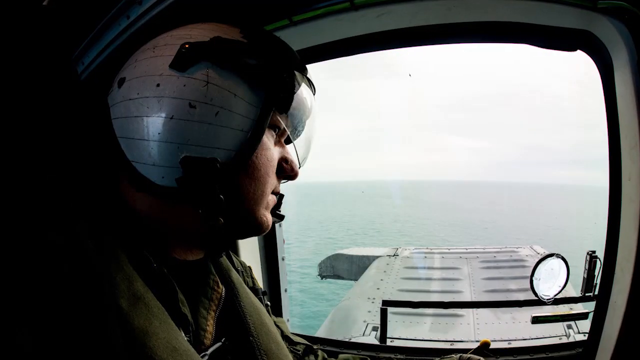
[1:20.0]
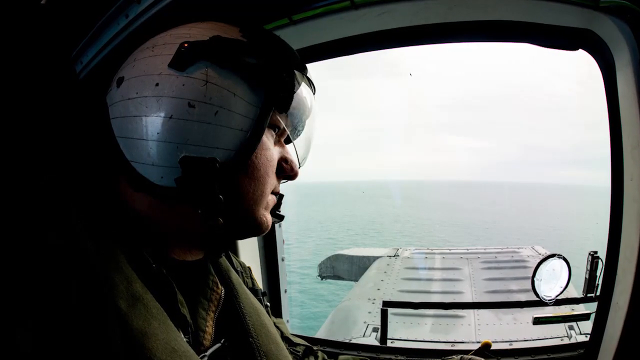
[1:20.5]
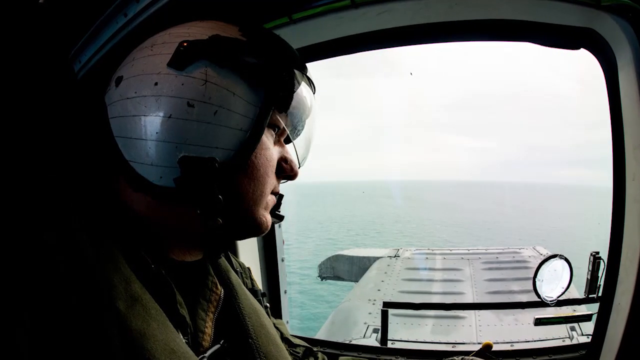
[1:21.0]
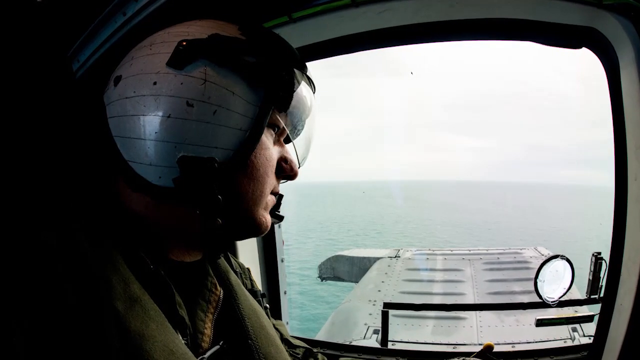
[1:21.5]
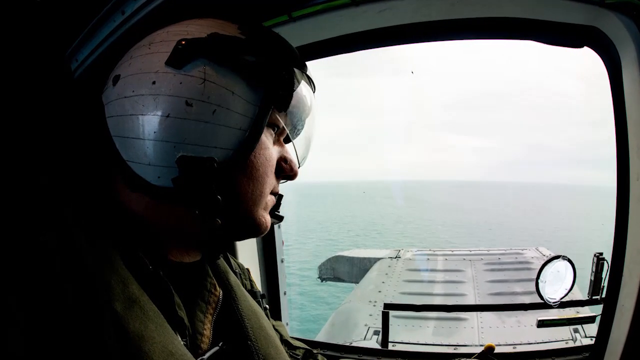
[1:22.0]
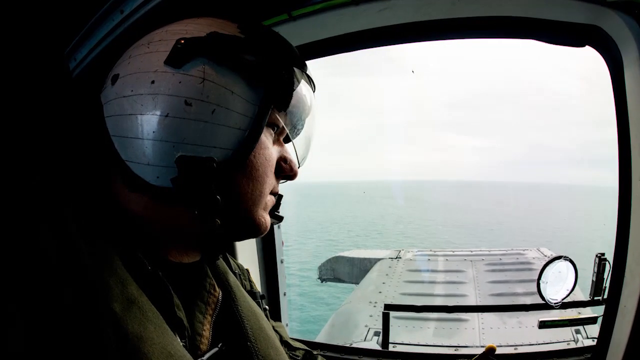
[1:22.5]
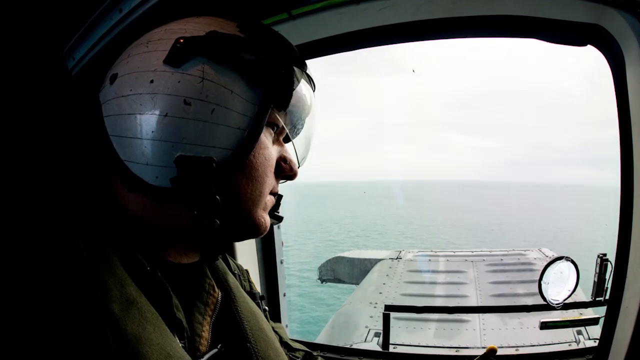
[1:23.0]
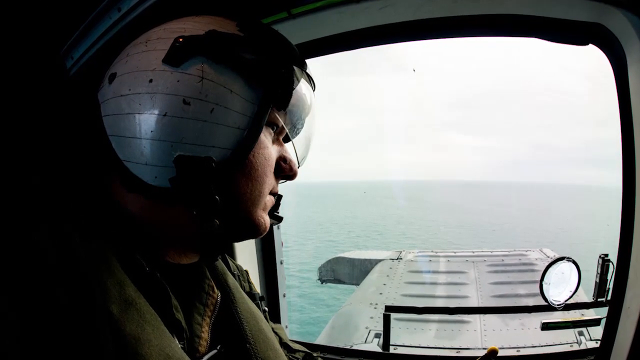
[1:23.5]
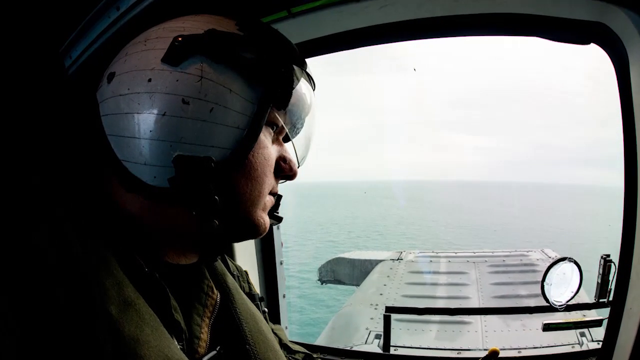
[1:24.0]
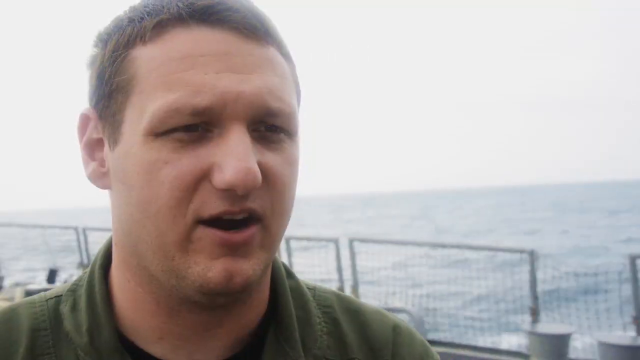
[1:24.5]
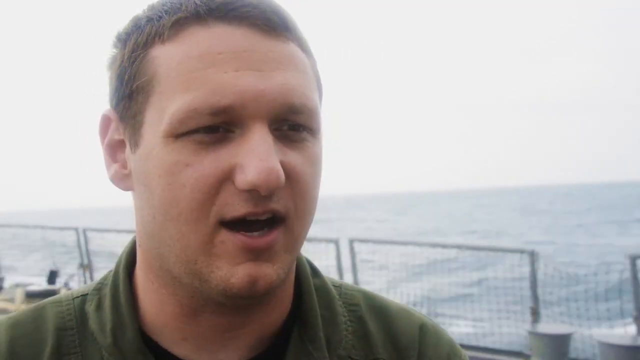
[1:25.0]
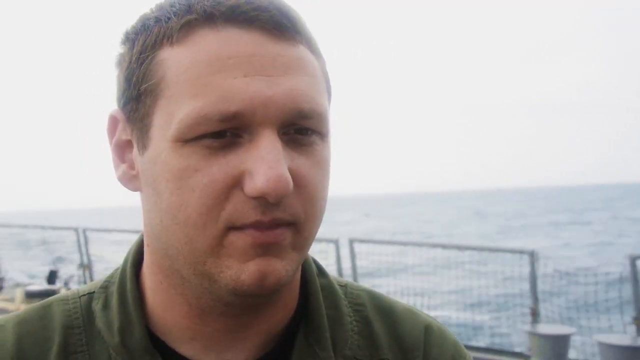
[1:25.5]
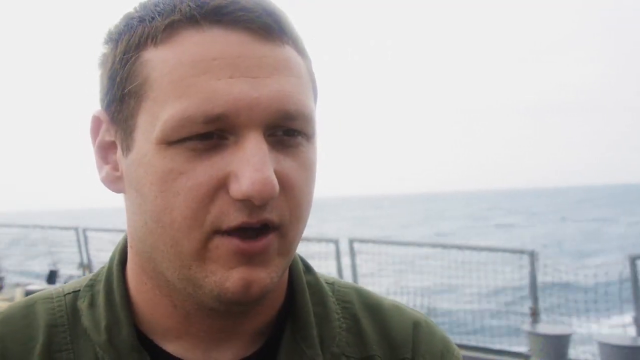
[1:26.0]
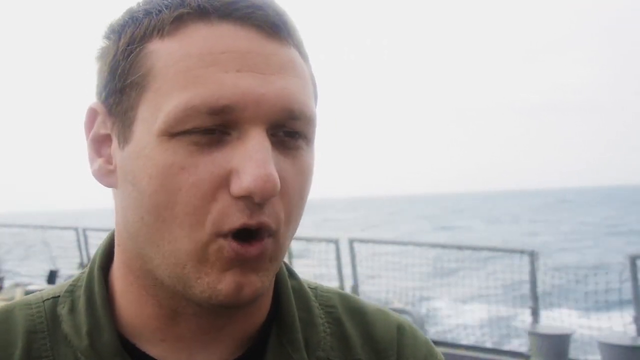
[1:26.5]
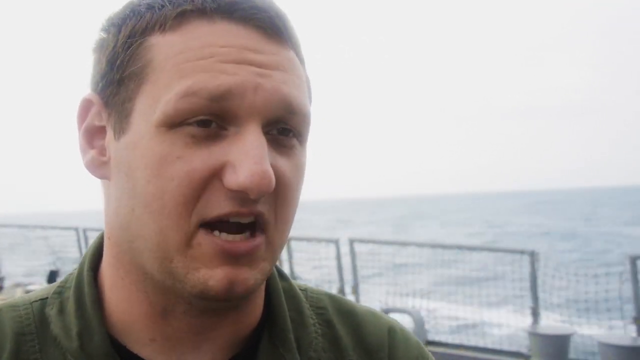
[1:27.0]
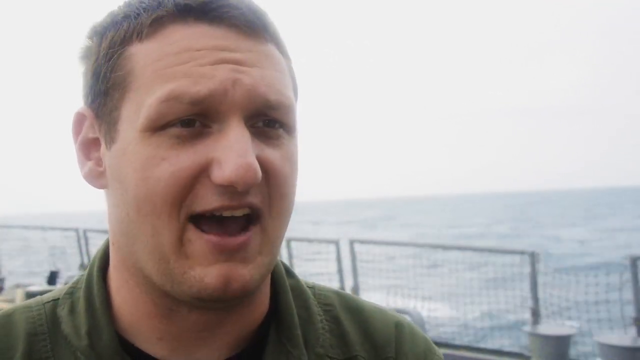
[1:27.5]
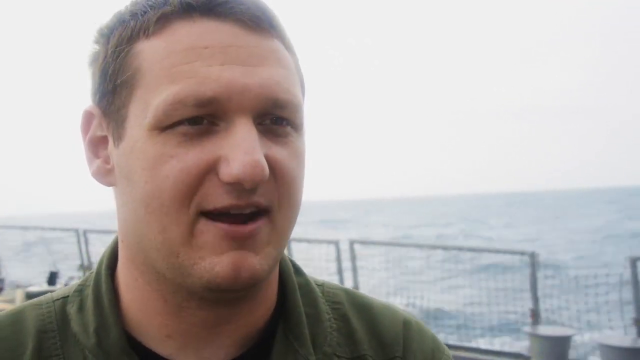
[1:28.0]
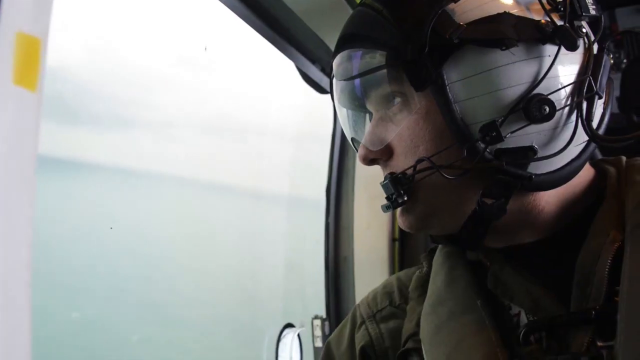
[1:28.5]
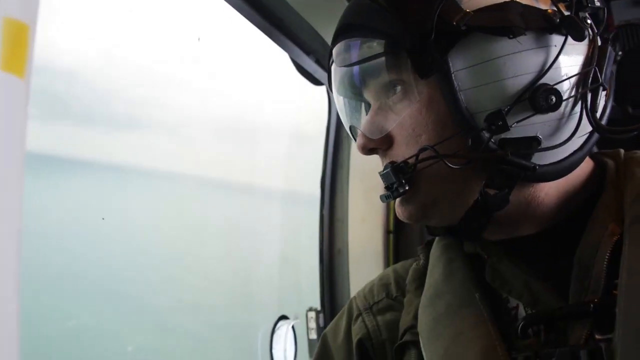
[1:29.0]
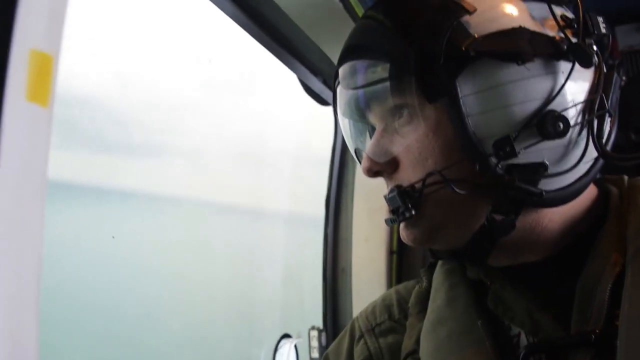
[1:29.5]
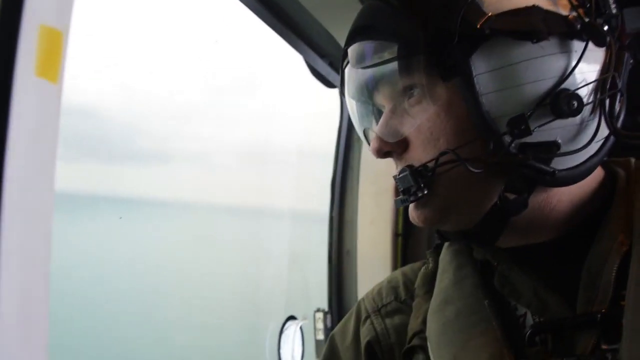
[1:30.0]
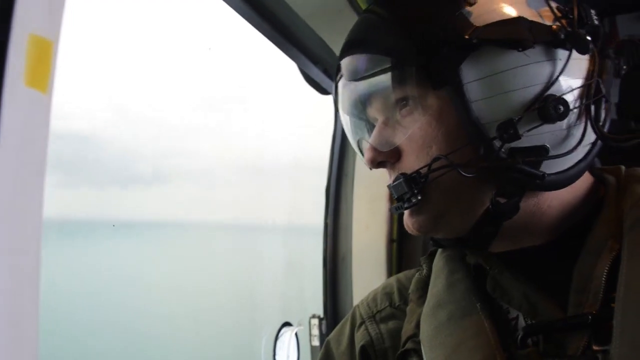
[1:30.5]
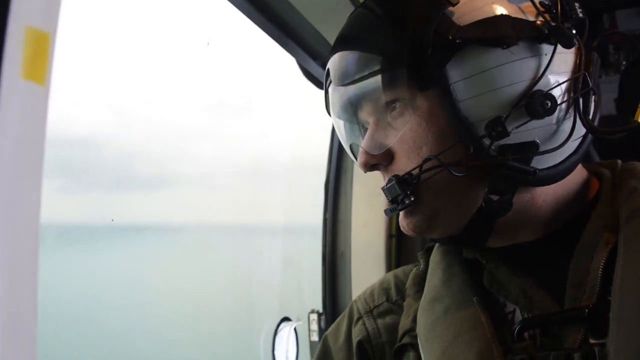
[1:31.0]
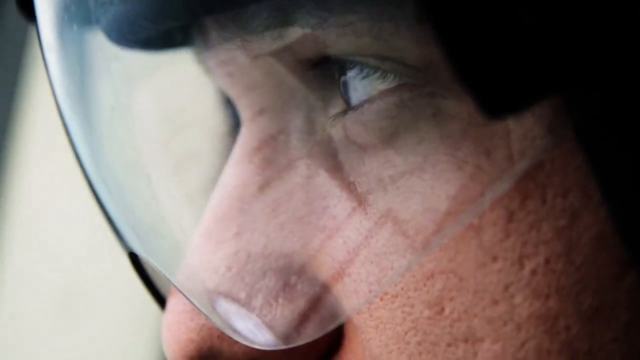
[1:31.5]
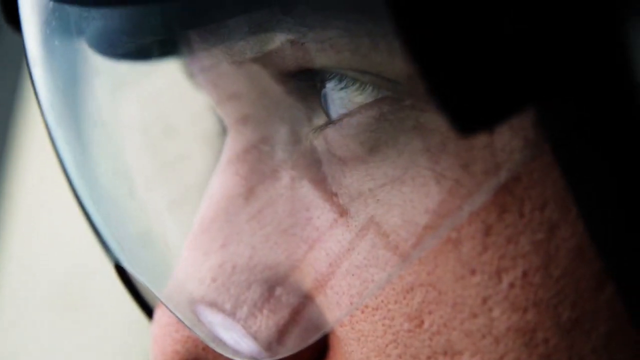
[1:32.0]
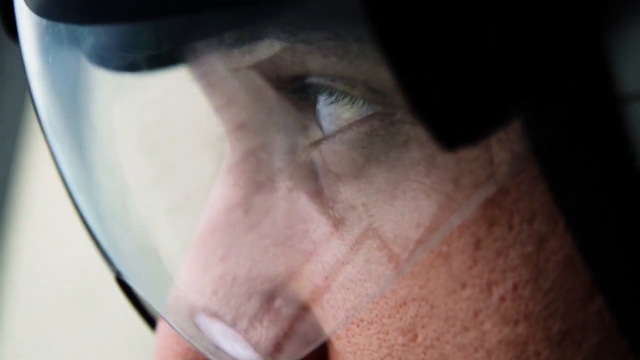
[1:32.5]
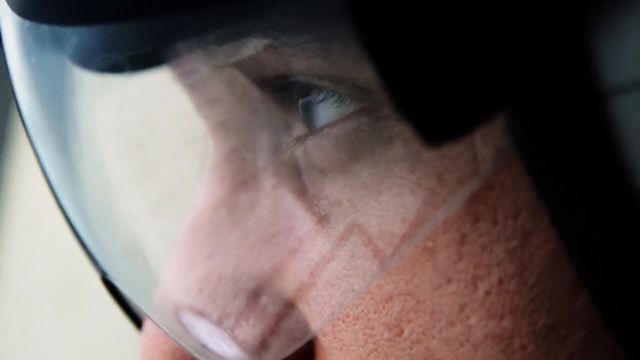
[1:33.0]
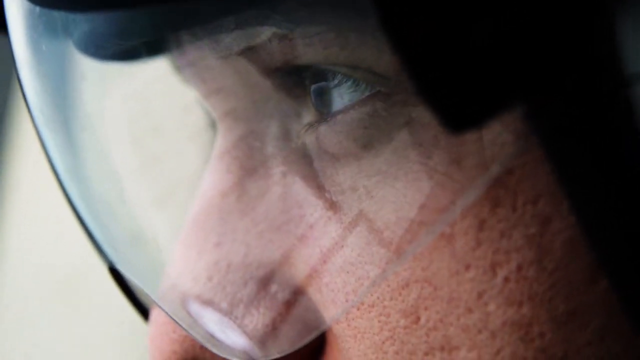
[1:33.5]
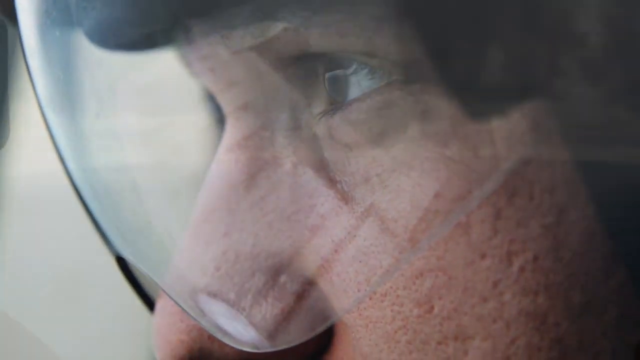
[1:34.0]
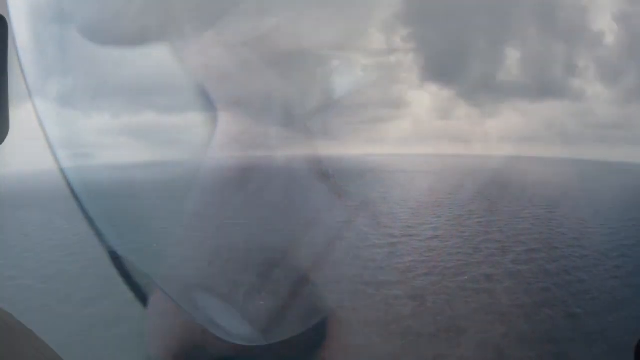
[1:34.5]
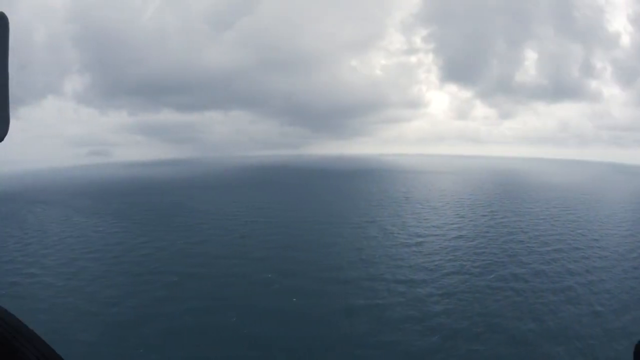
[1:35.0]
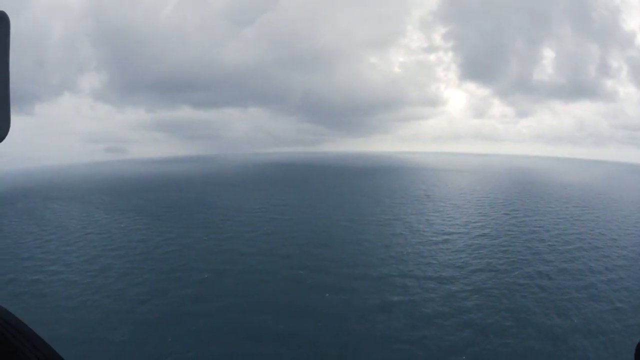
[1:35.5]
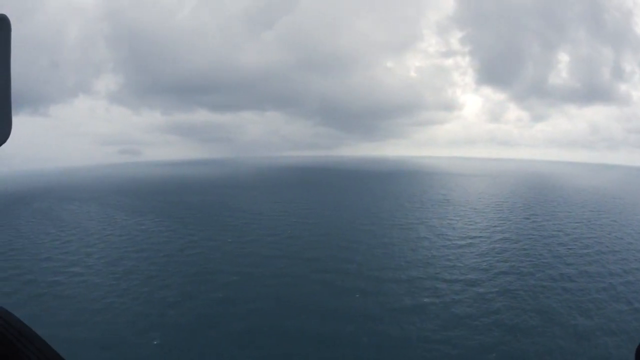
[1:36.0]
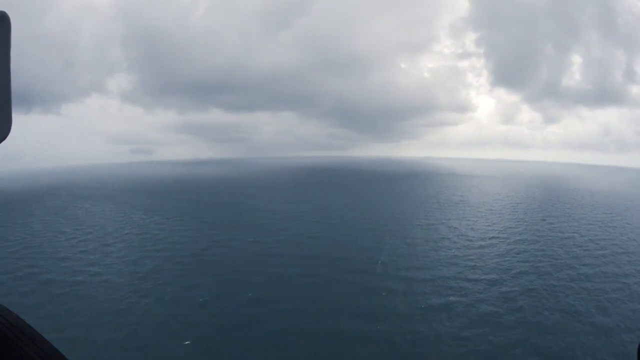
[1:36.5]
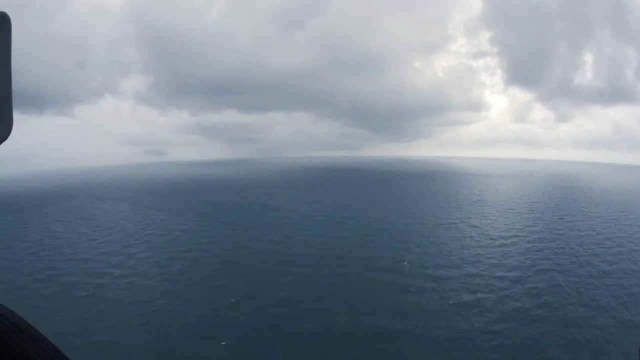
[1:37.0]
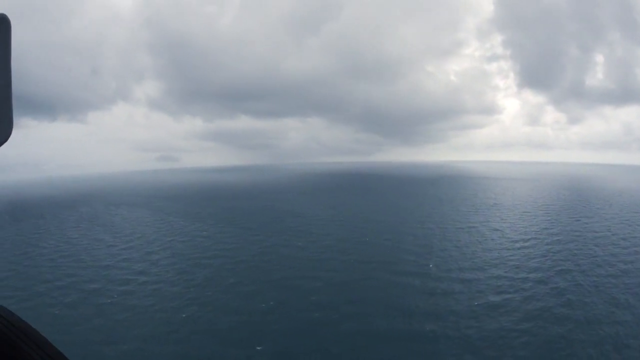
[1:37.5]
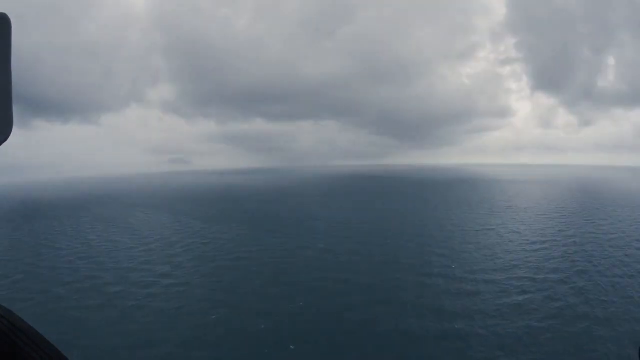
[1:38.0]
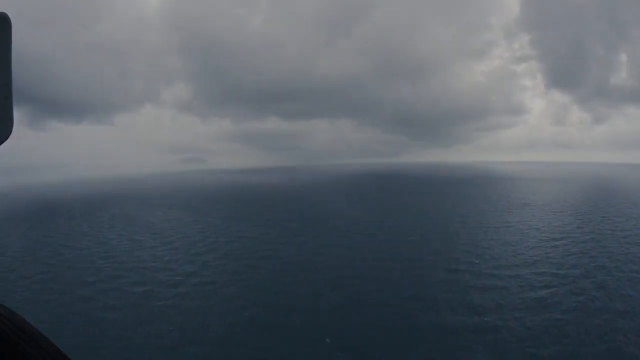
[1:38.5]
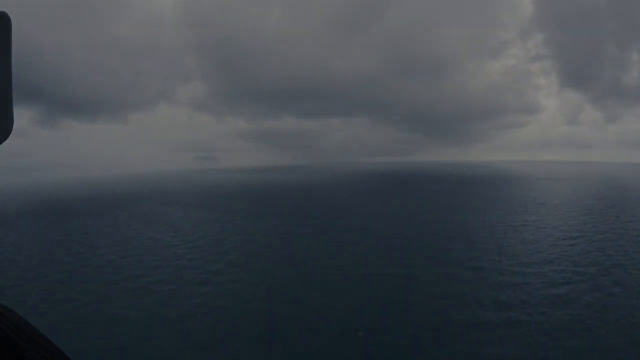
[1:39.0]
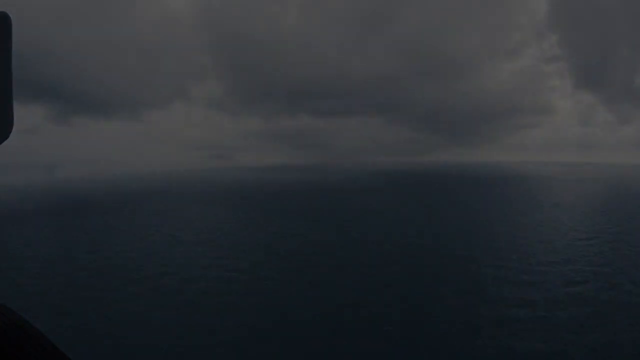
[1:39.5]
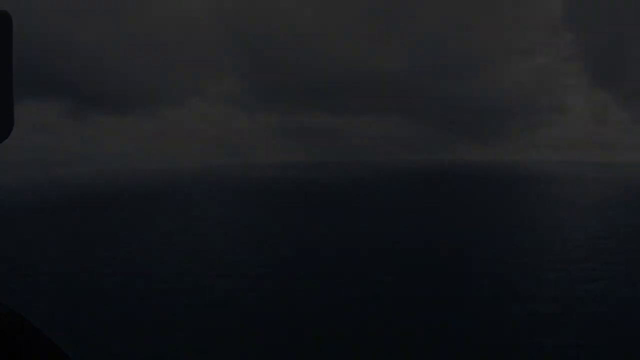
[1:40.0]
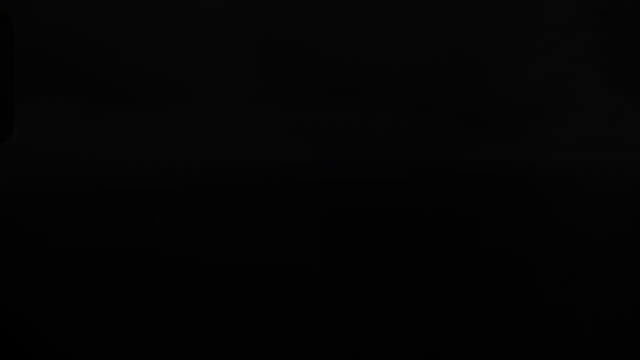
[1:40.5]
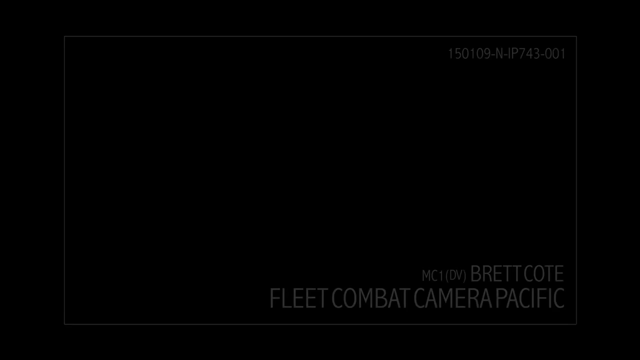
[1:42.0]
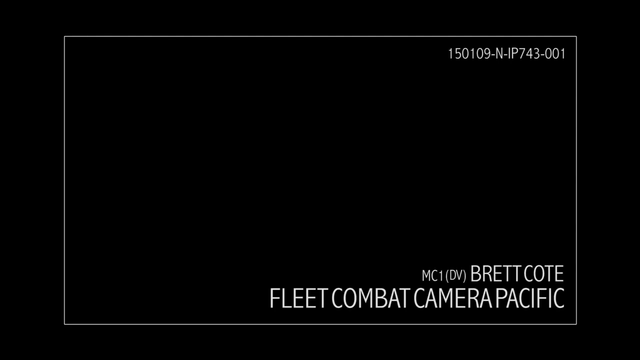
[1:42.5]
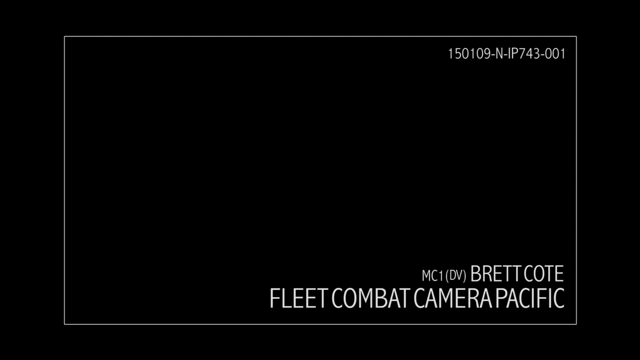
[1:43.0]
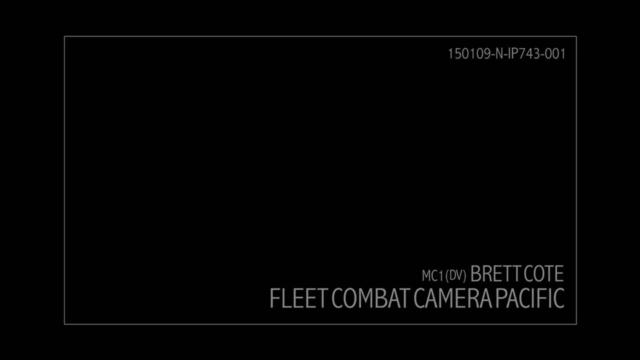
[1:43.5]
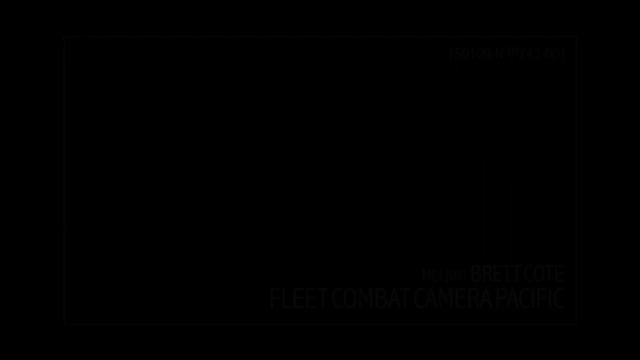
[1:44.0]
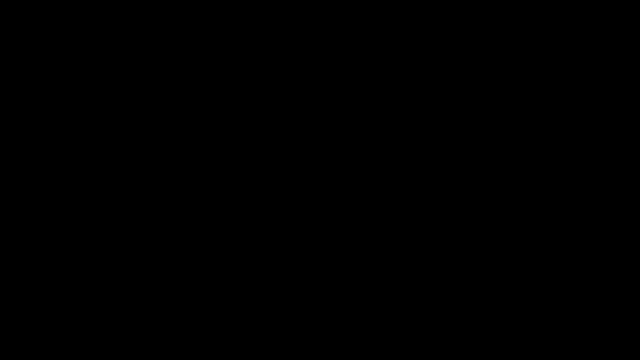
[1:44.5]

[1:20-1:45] Giardina, an air crewman, looks out a helicopter window, gazing over the ocean. Another shot shows him being interviewed on the aircraft carrier during the daytime, with the sea and some guardrails behind him. He is then shown in a helicopter again, wearing a helmet and a harness and looking out the window, with a close-up of his eyes as he looks around for something. A shot of the horizon shows it curving, with the water surface looking very calm and overcast skies above. The image fades to black and stays black for two seconds. Text then appears: a barcode at the top right corner with "150109-N-IP743-001", and at the bottom right "MC1DV Brett Cote Fleet Combat Camera Pacific".